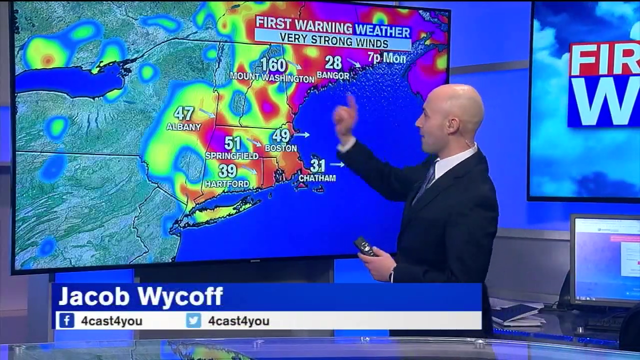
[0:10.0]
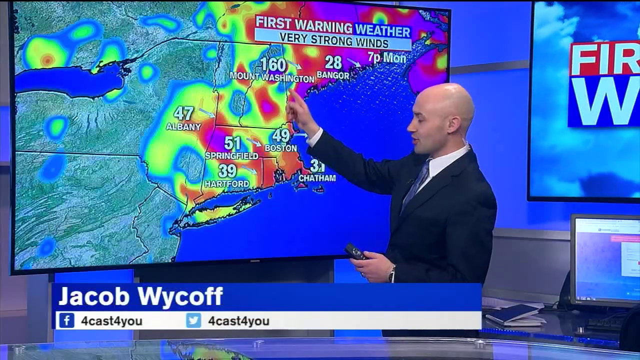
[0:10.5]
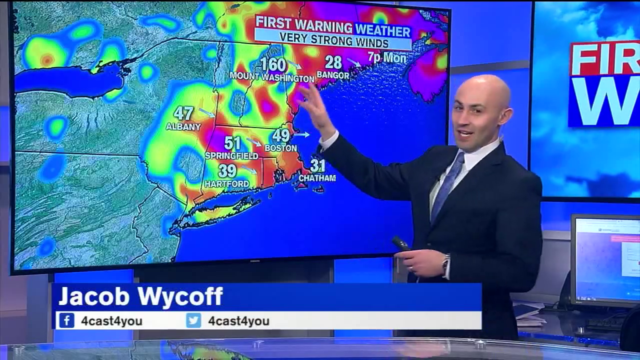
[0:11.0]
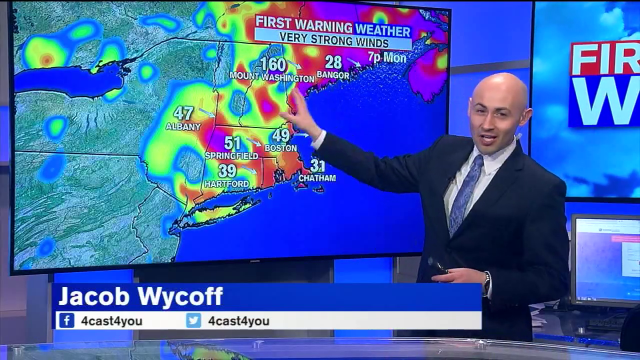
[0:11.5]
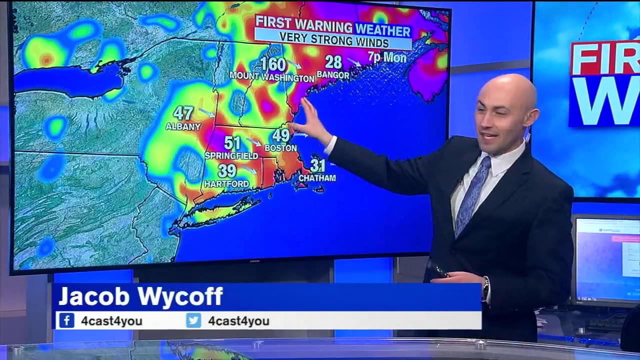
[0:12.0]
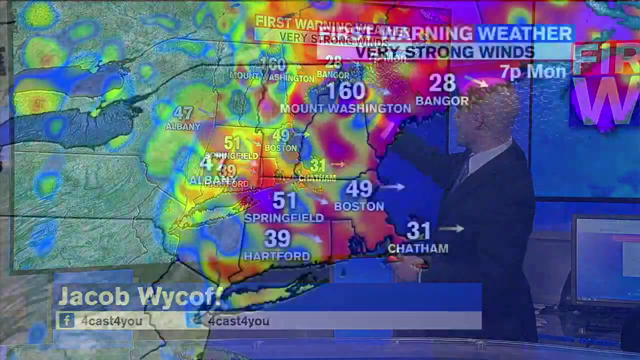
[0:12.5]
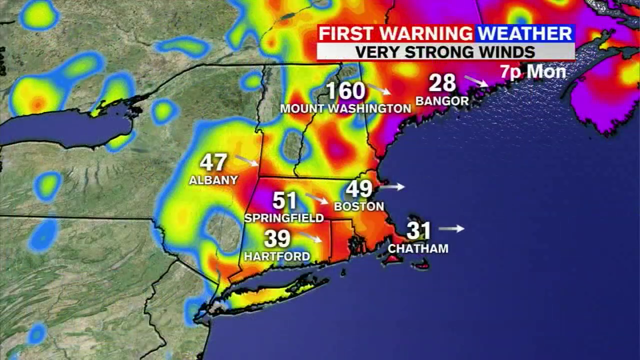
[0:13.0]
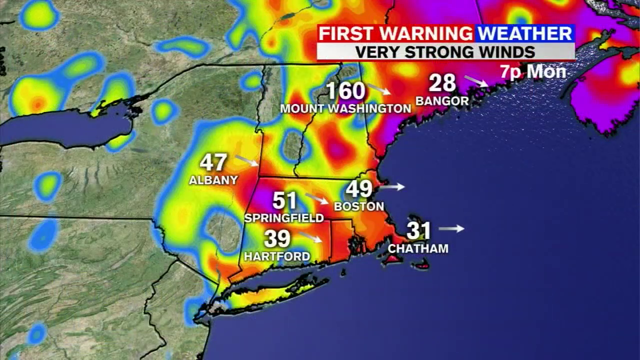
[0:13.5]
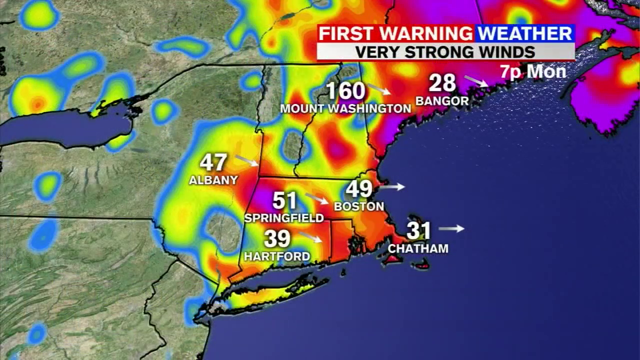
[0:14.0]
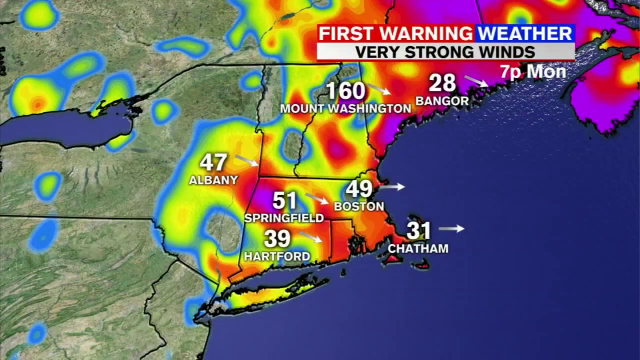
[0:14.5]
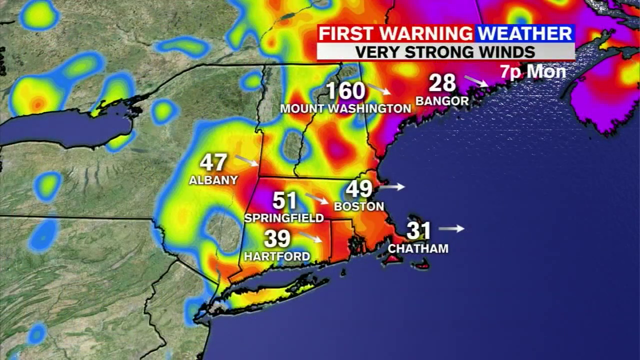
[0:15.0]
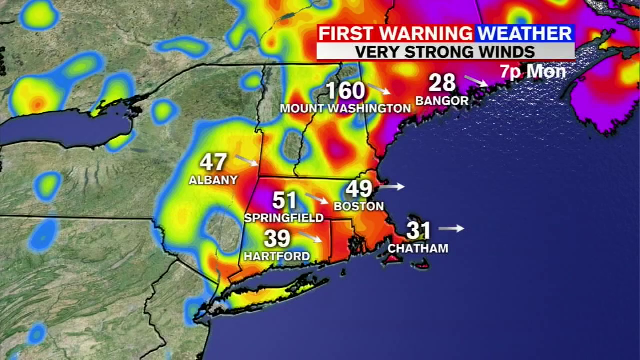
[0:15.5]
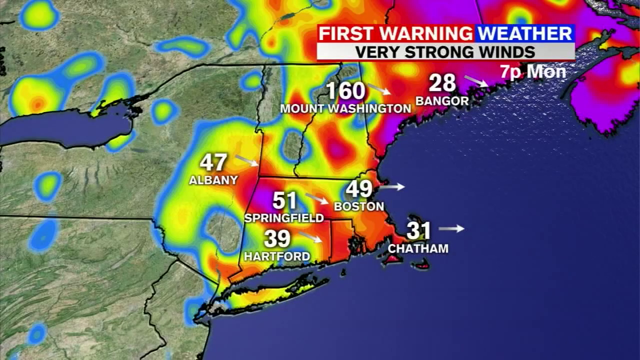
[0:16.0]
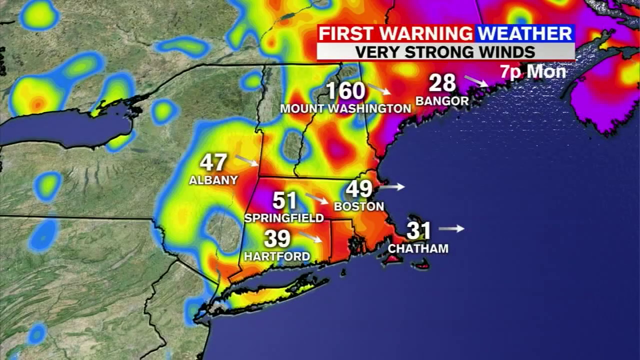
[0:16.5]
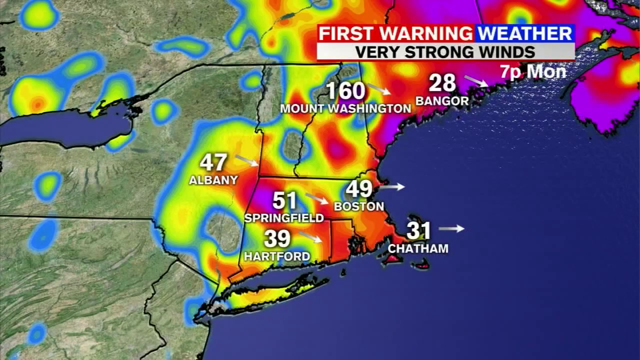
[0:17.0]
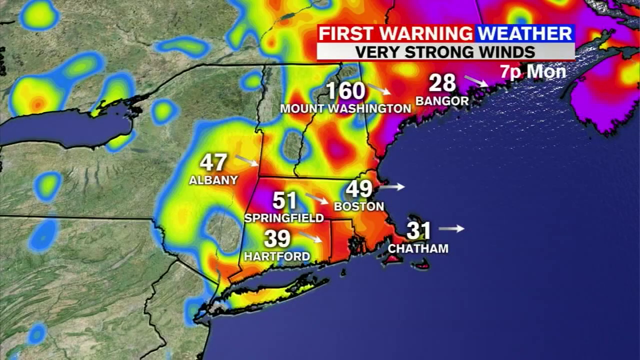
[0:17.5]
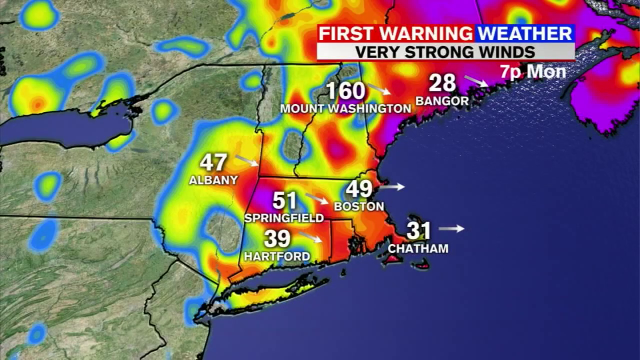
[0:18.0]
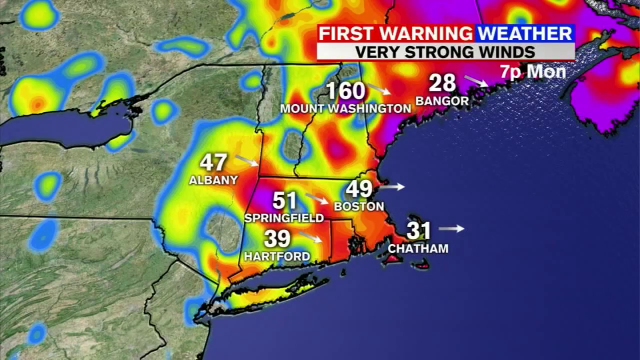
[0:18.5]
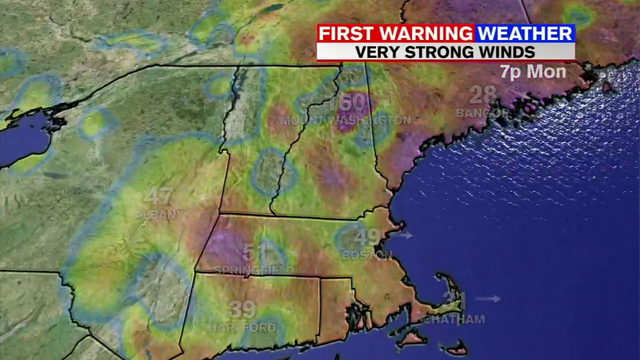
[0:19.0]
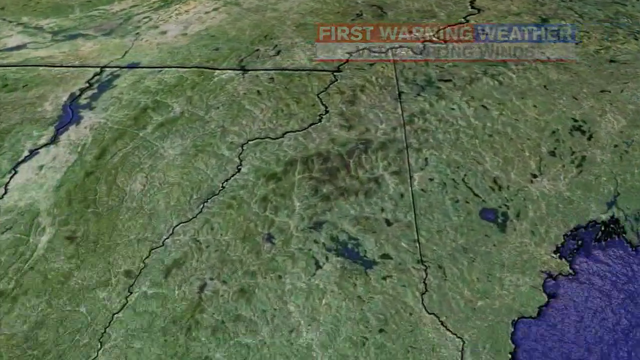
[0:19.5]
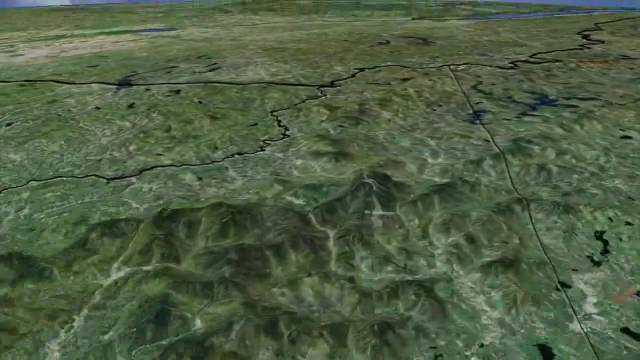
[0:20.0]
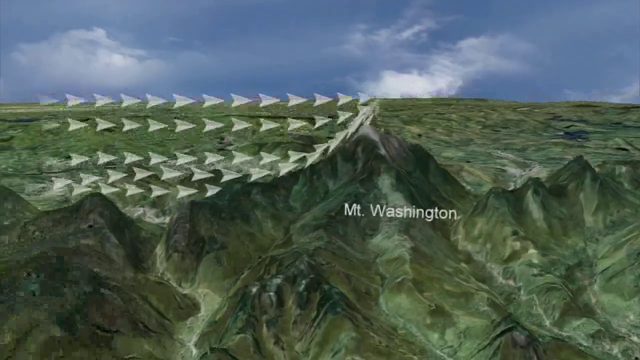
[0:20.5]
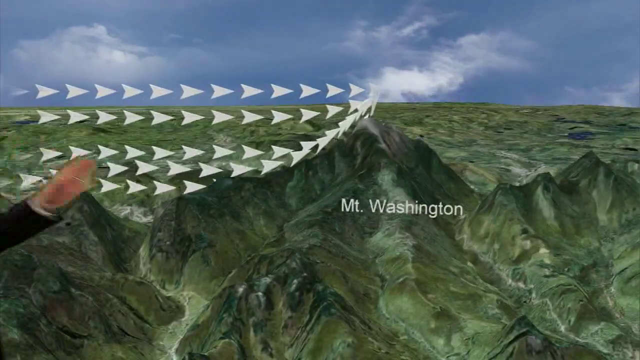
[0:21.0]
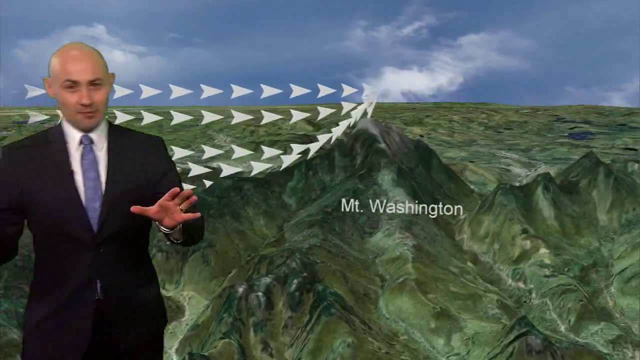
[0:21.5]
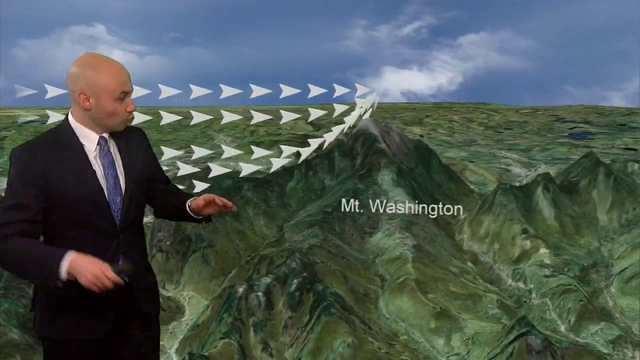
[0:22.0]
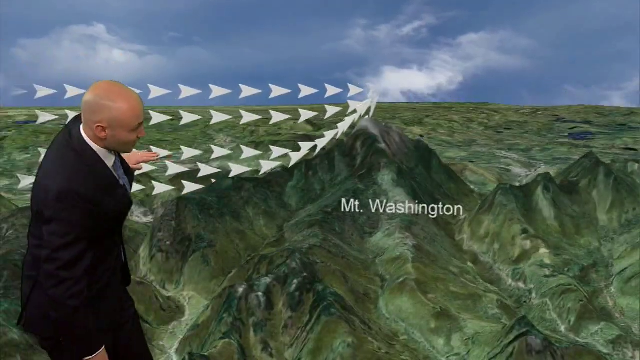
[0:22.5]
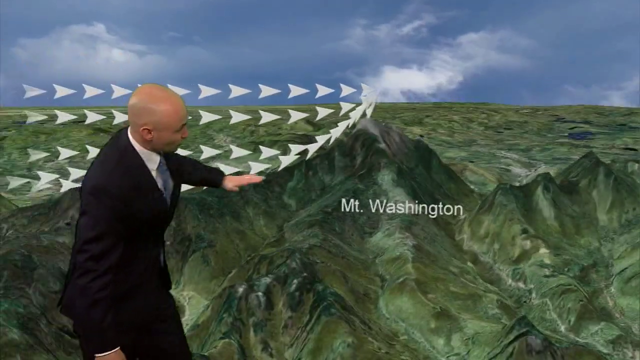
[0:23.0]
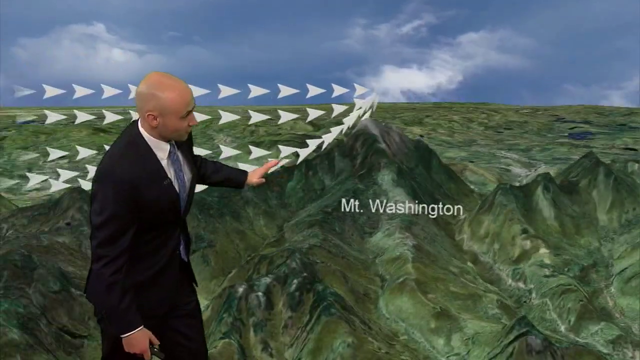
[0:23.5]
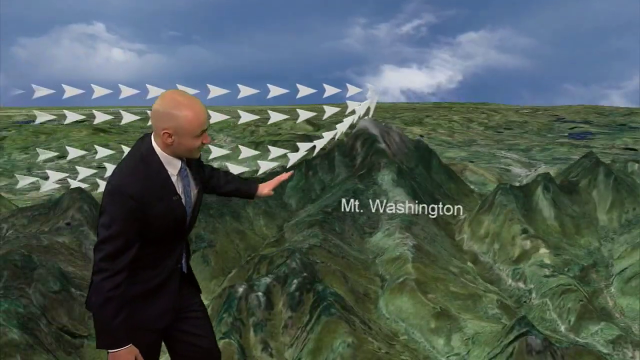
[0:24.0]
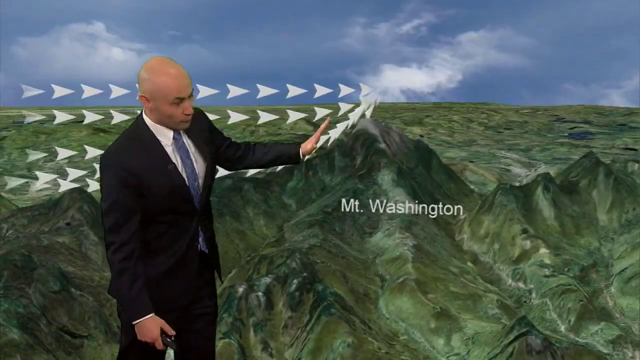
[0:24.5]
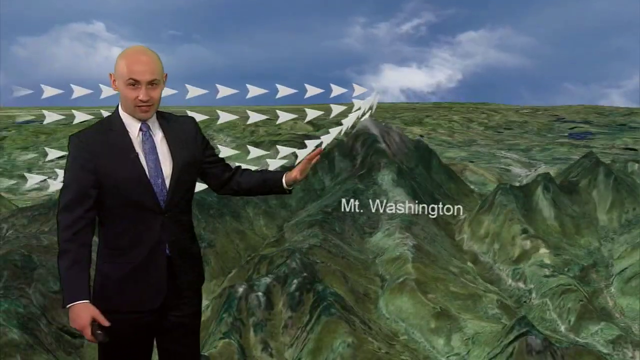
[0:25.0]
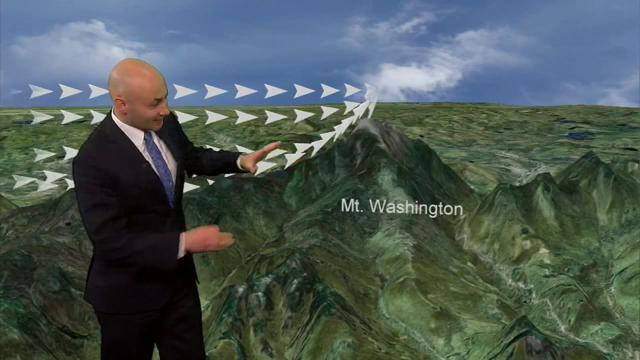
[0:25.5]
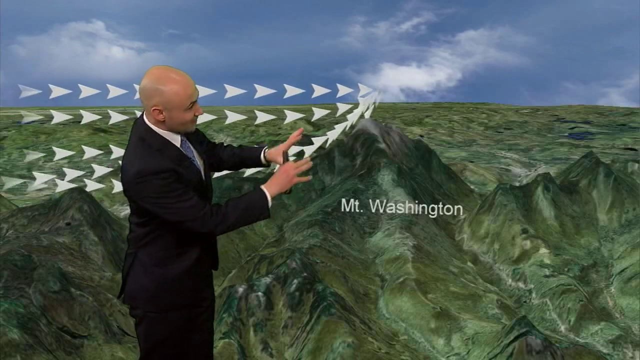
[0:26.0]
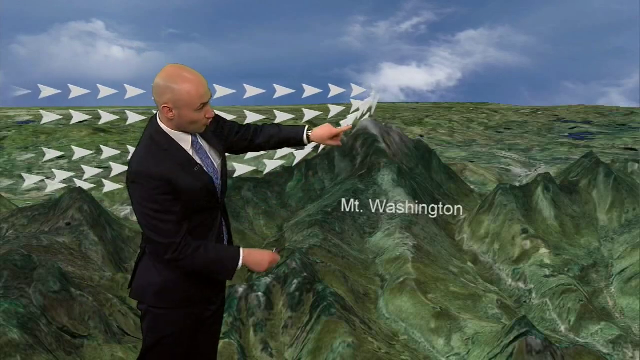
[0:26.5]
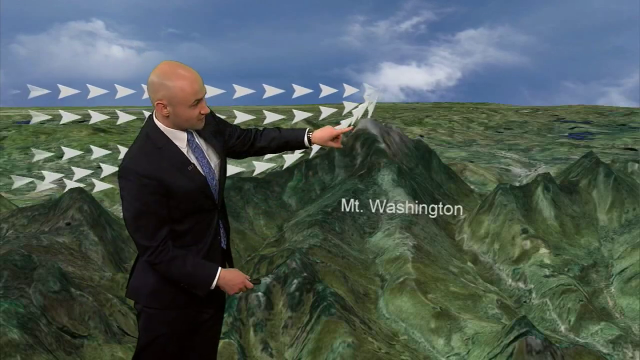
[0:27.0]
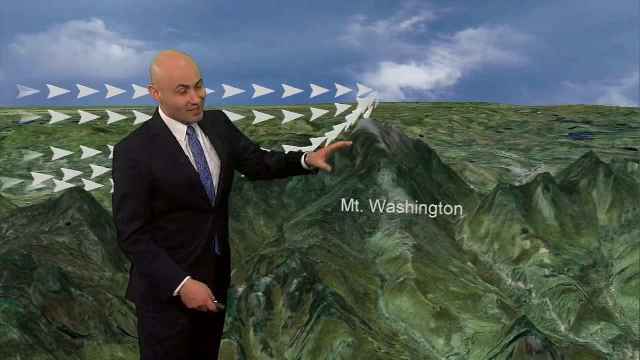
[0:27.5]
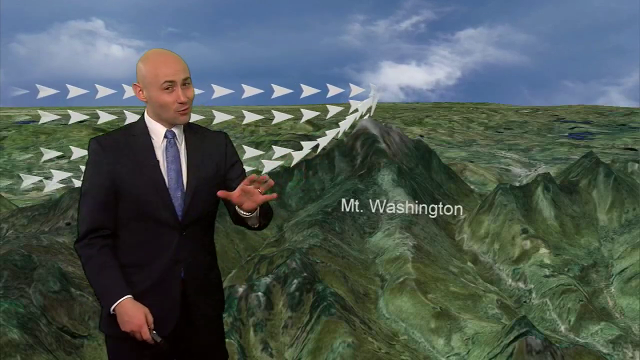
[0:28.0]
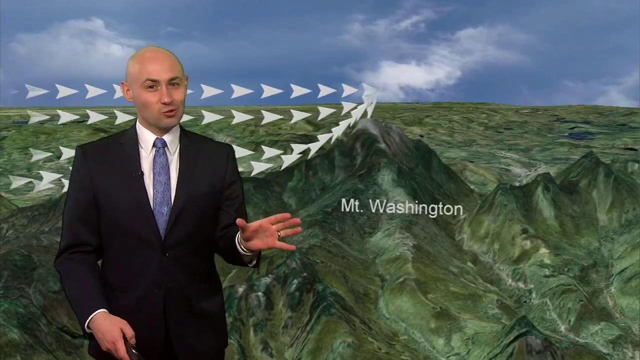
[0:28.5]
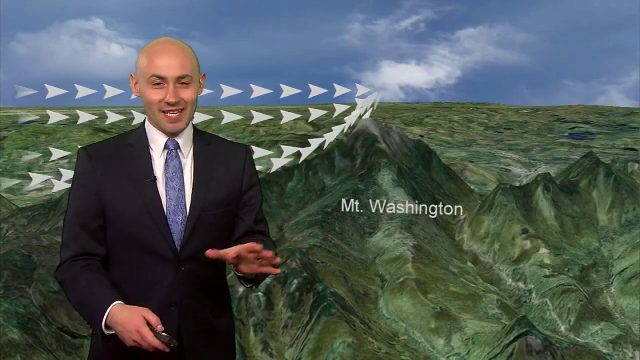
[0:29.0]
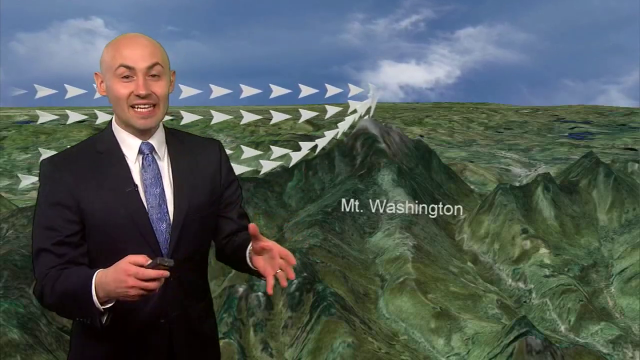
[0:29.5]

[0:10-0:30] Bald male weather reporter Jacob Wycoff stands presenting the weather report in a studio, in front of a screen displaying information on a weather map. He gesticulates with his right hand and points it at the screen, while holding a black electronic device in his left hand. The video cuts to a close shot of part of the map showing weather information for places such as Albany, Springfield and Mount Washington. The text "First Warning Weather" and "Very Strong Winds" is visible in the top right corner of the screen, and the map shows patches of different colours. The video then transitions to the man in front of a 3D map showing what looks like currents flowing through what looks like the middle of sea waves, where the middle is shallower. The text "Mt Washington" is on the screen, and the image probably shows the impact of the weather on the mountain. Some clouds are visible in a light blue sky.